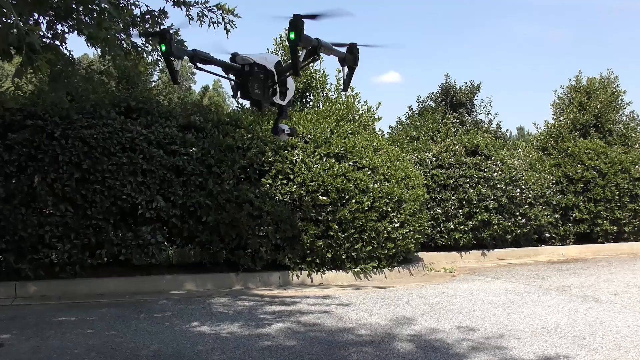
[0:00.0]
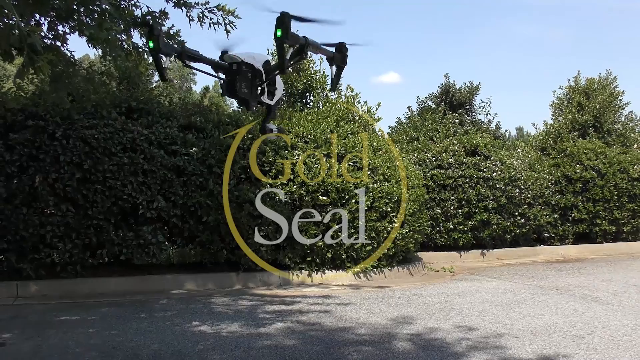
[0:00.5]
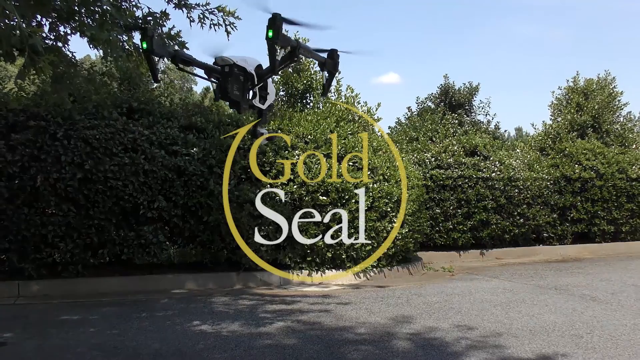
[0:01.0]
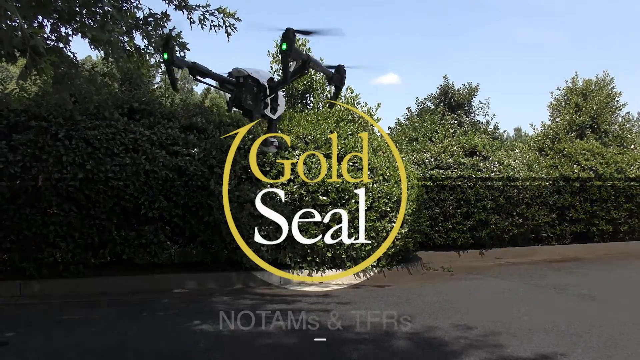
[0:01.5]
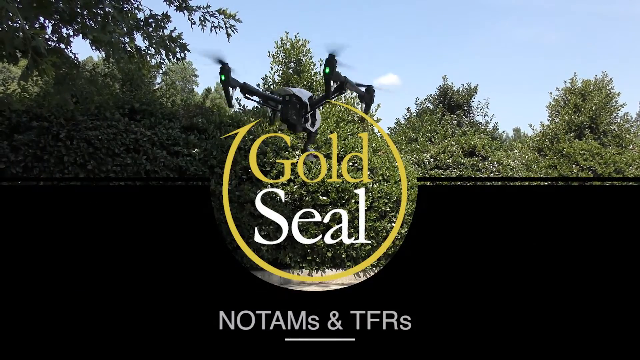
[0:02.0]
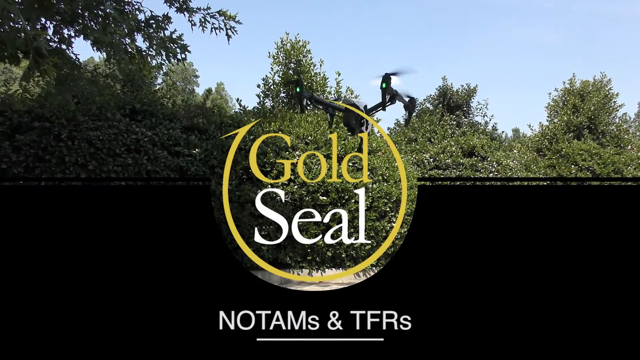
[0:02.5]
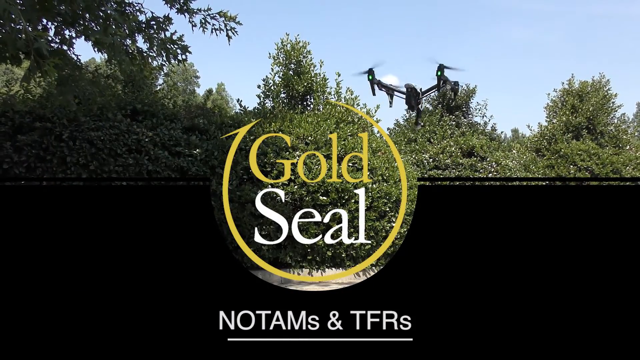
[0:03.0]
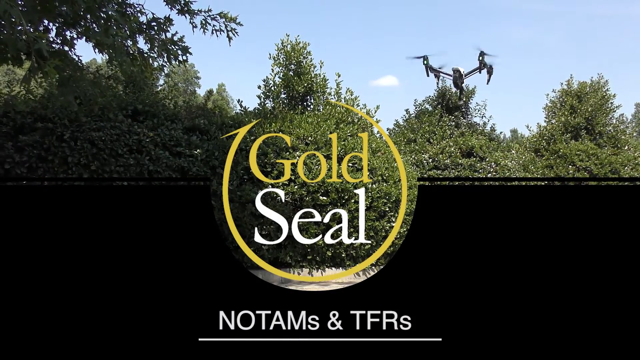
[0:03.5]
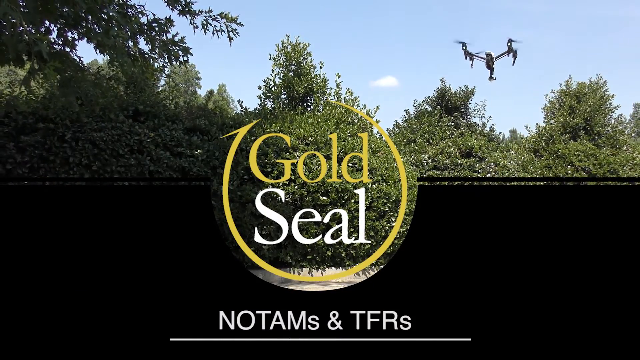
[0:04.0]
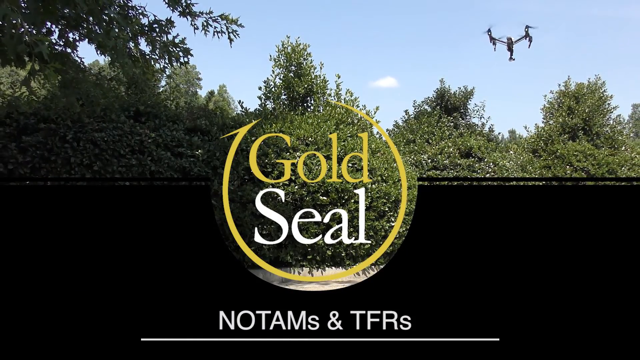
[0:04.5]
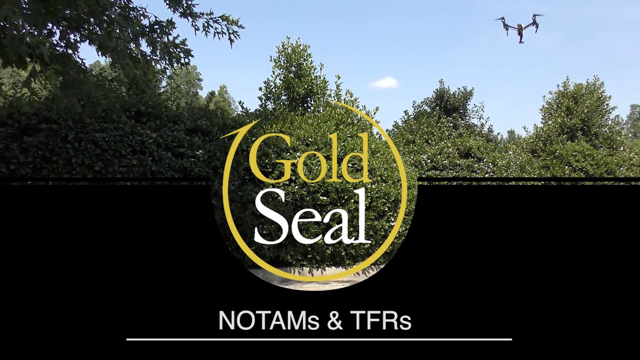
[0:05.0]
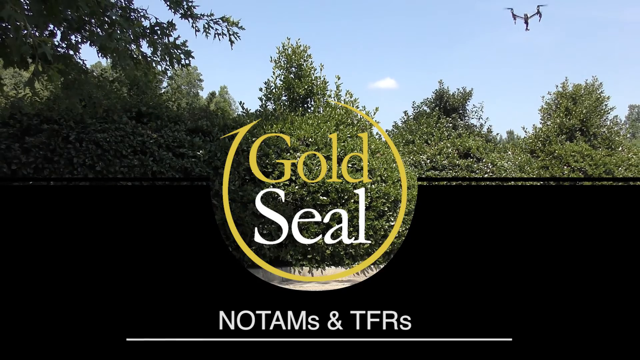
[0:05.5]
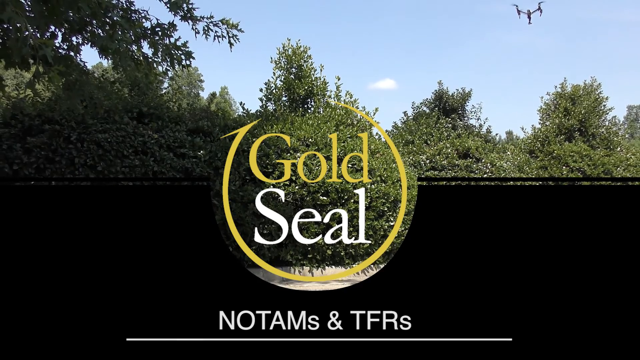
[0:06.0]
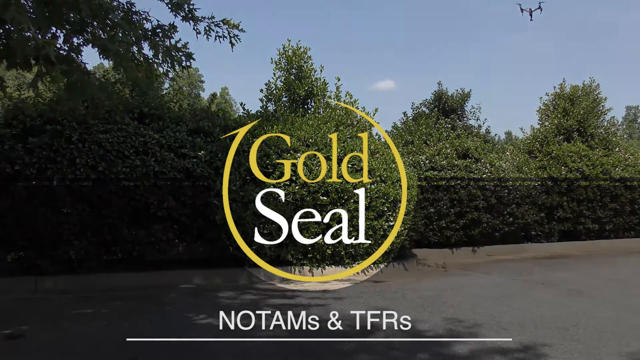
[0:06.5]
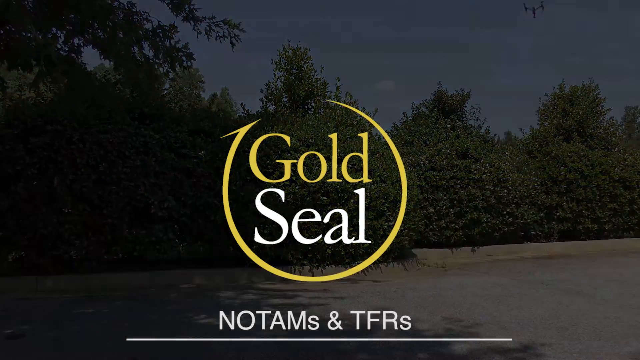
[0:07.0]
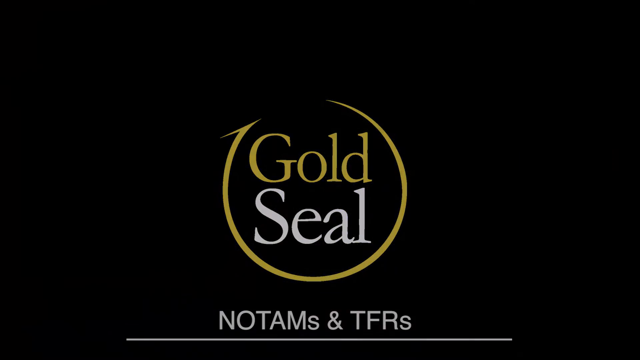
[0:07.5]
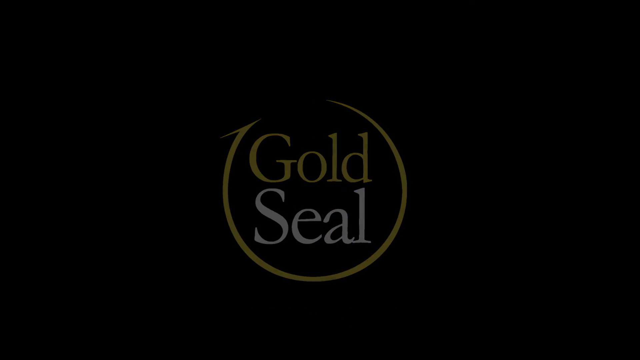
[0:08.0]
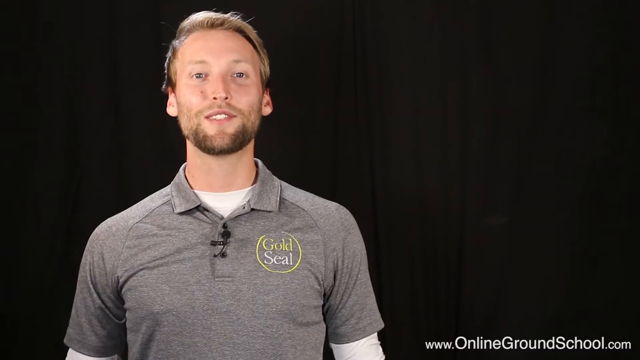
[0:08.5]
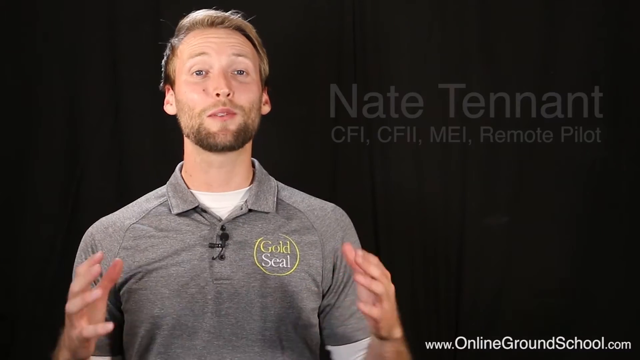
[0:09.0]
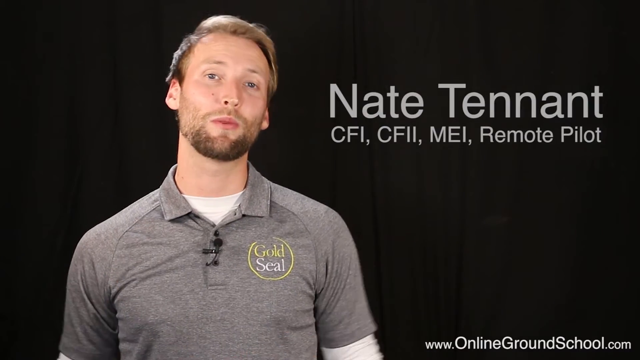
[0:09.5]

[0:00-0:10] An outdoor scene on a bright sunny day shows what appears to be a concreted space surrounded by hedges, with a drone flying in the air in the foreground. A company logo reading "Gold Seal" appears in the centre of the screen. A black background appears across the lower half of the screen, and below the logo white text appears reading "NOTAMs & TFRs". The drone appears to take off, rising into the air and moving further from the camera. The video fades out to a black background with a man on the left side of the screen. He wears a grey t-shirt with the Gold Seal logo on it and has a microphone attached to his t-shirt, and he talks towards the camera. On the right-hand side, text appears reading "Nate Tennant" and underneath it "CFI, CFII, MEI, remote pilot".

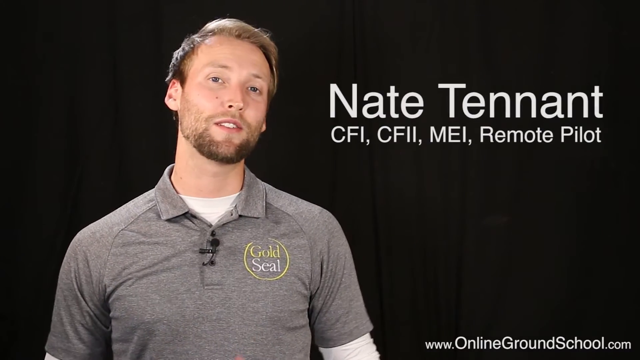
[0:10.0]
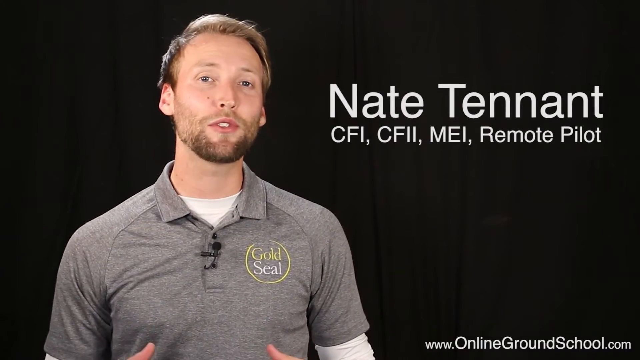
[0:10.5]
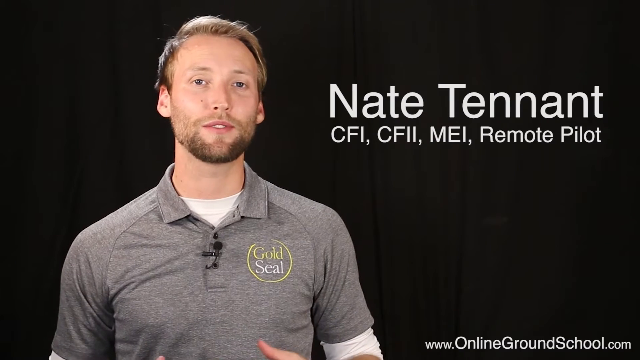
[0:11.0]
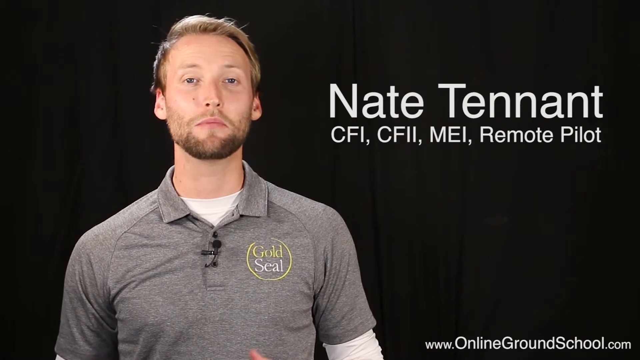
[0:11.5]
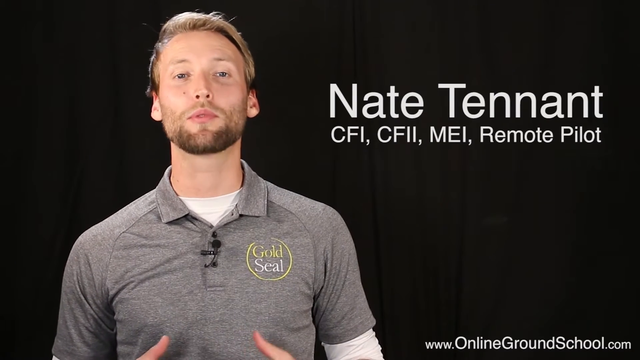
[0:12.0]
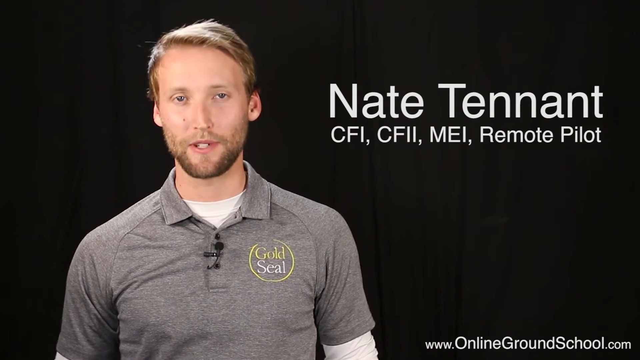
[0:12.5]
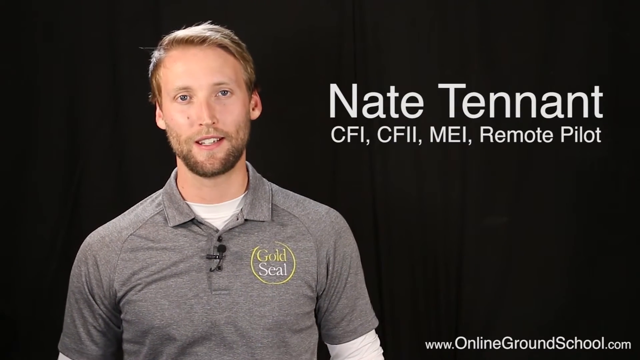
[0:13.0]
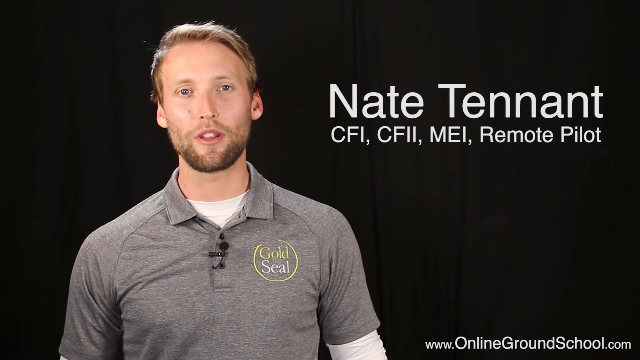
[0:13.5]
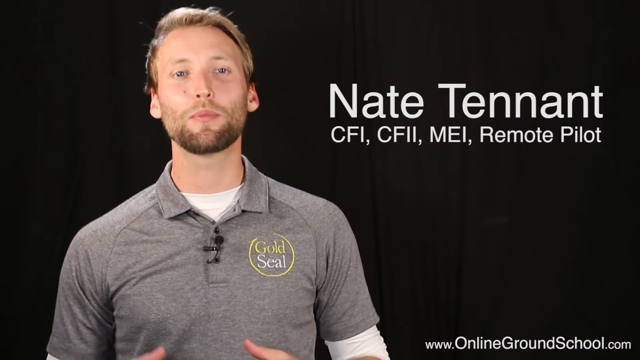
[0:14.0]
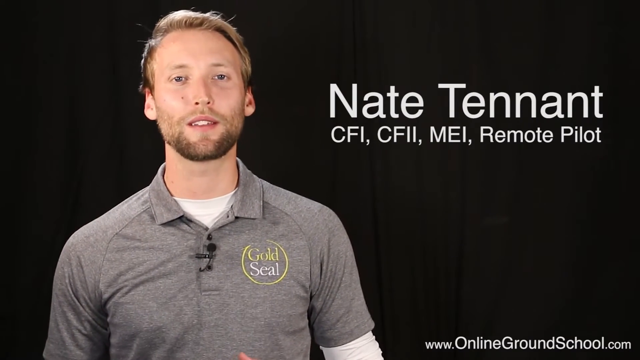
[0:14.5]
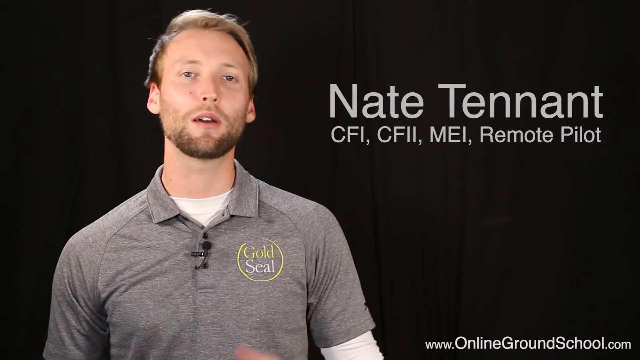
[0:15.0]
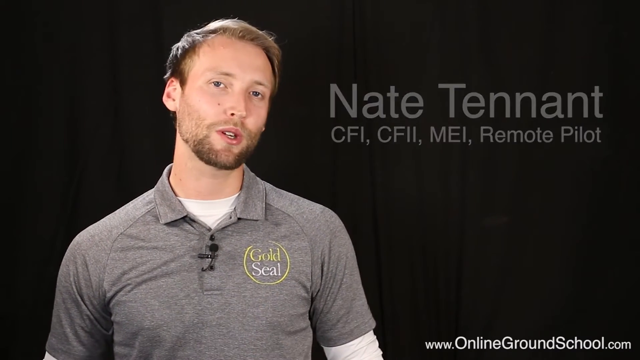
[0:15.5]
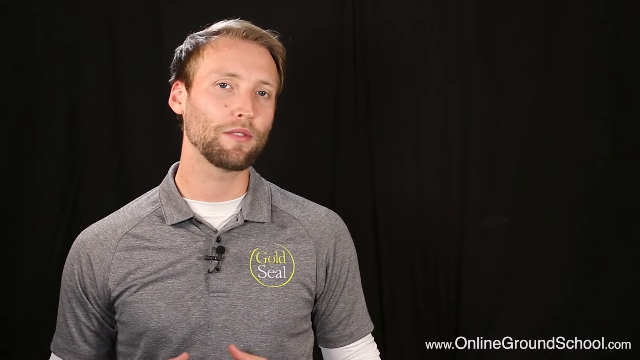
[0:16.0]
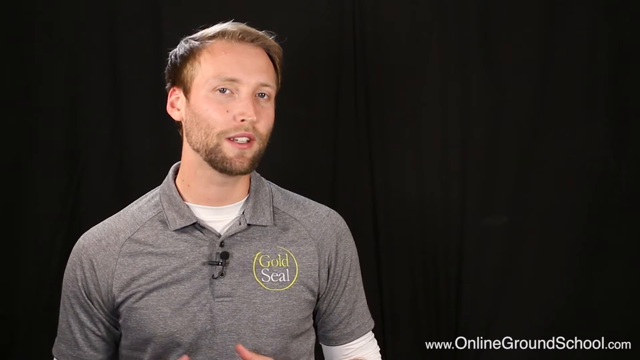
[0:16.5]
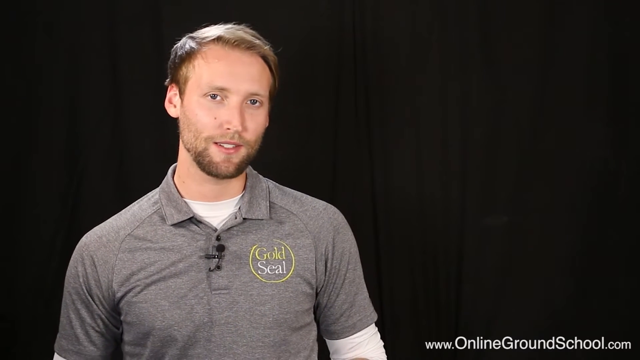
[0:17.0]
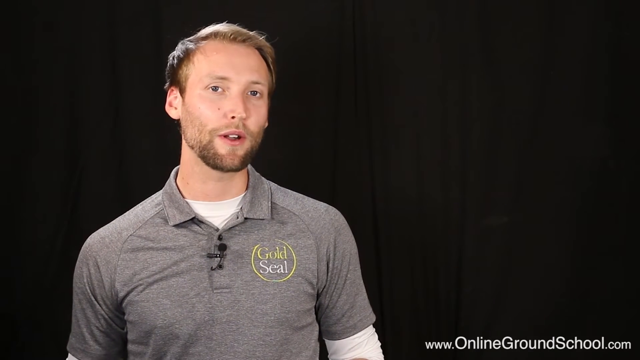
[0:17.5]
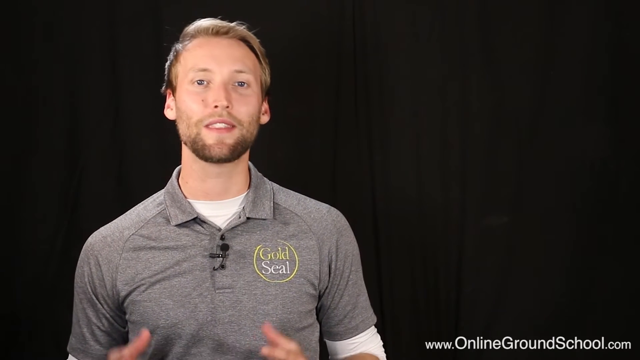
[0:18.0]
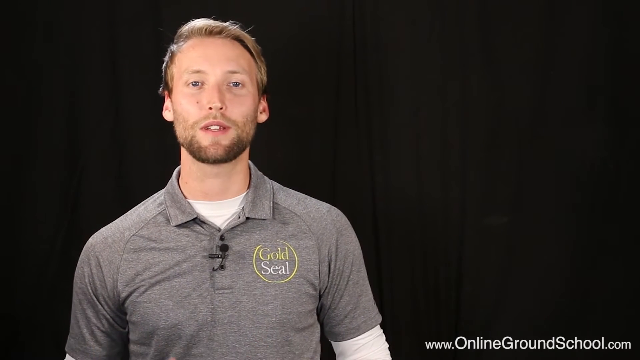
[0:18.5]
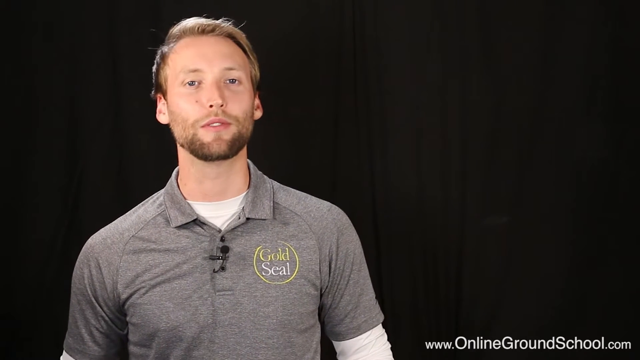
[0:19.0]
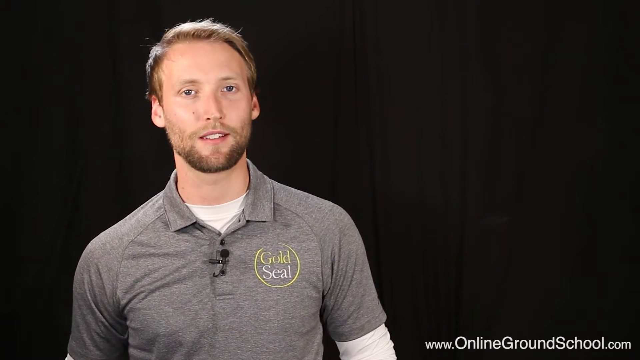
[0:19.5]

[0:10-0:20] A man is on the left side of the screen against a solid black background. On the right side, white text shows his name, "Nate Tennant", with qualifications written below: "CFI, CFII, MEI, remote pilot". He wears a grey t-shirt with a Gold Seal logo and has a microphone attached to his chest area. He looks directly at the camera and talks towards it. He looks to be about 35, with short blonde hair and a blonde beard. The video then transitions to show a screenshot.